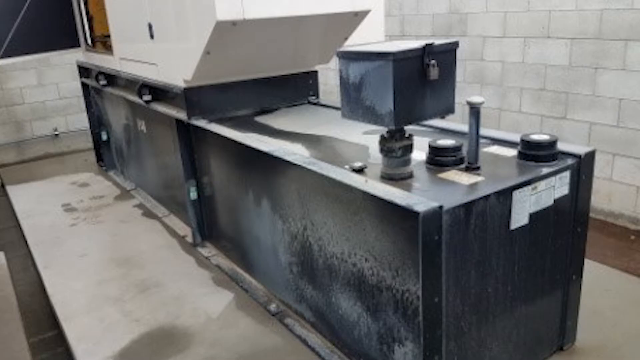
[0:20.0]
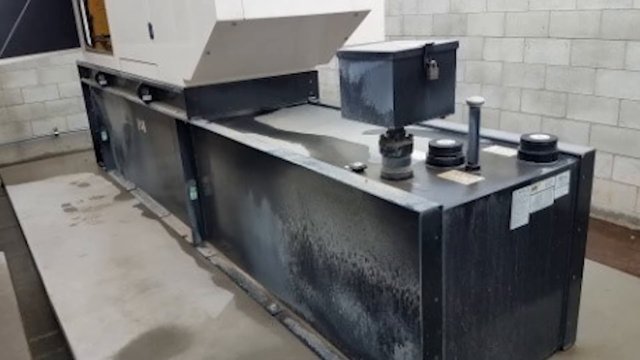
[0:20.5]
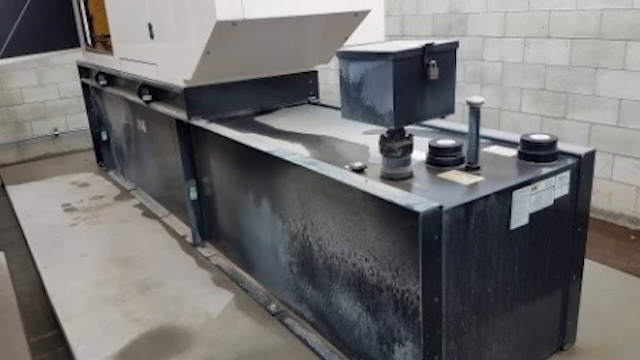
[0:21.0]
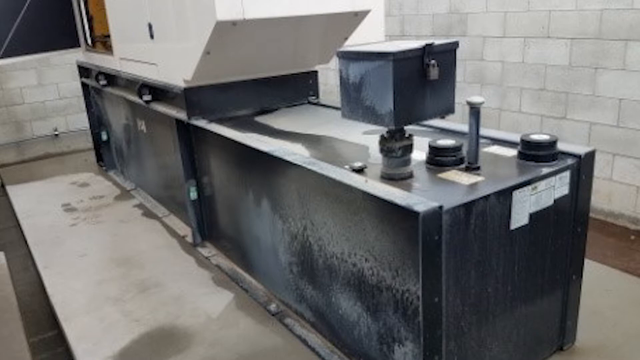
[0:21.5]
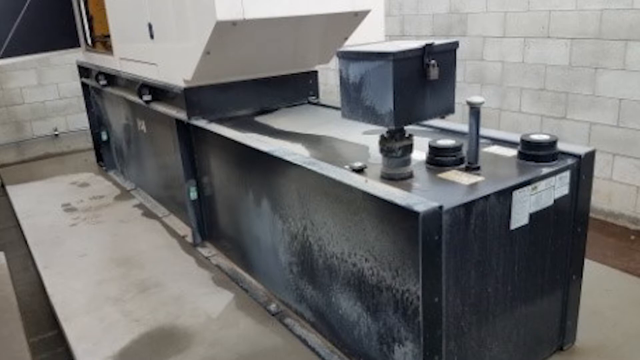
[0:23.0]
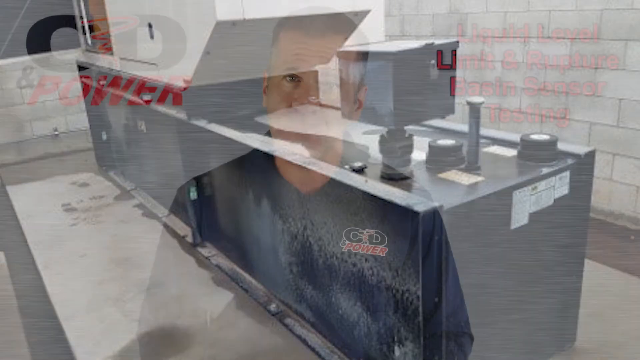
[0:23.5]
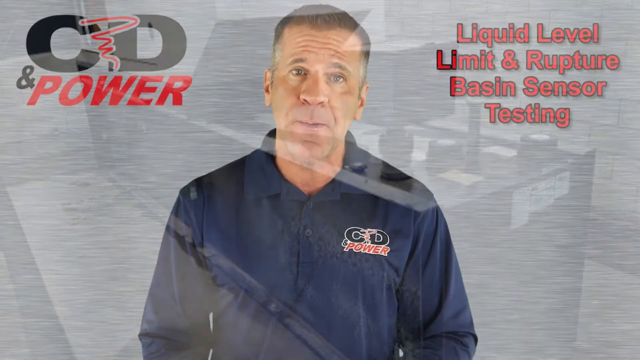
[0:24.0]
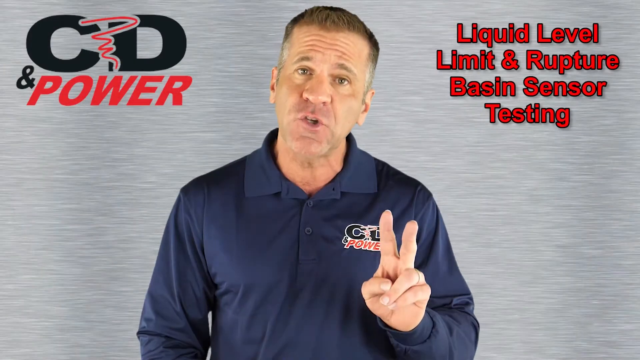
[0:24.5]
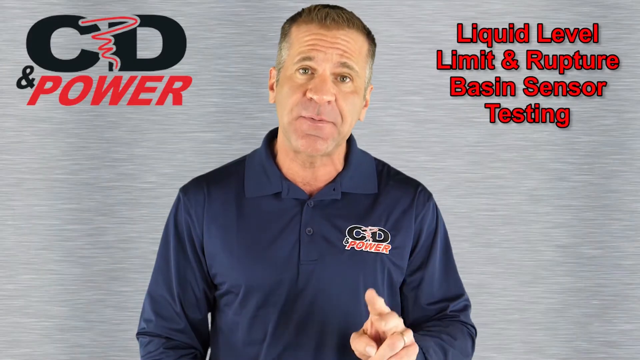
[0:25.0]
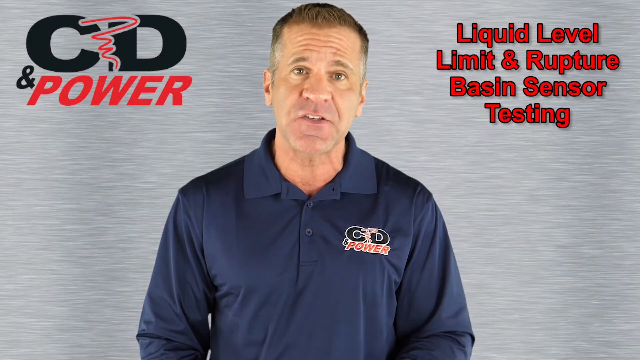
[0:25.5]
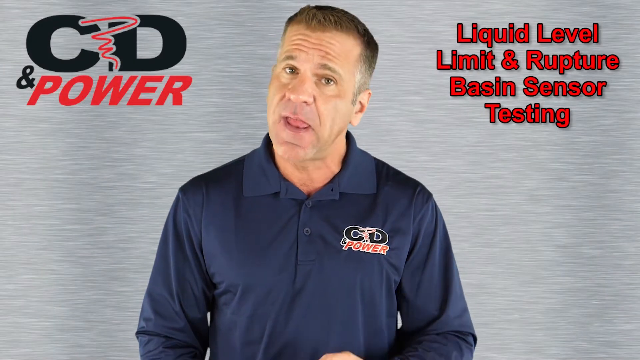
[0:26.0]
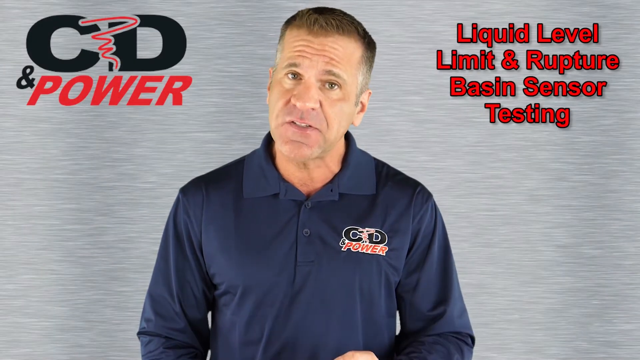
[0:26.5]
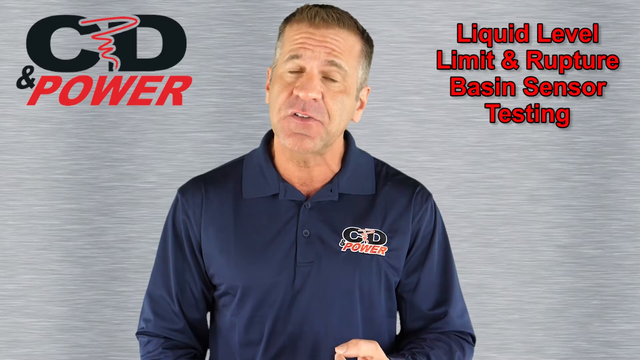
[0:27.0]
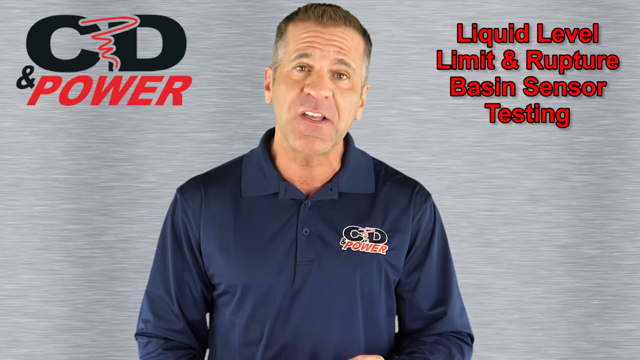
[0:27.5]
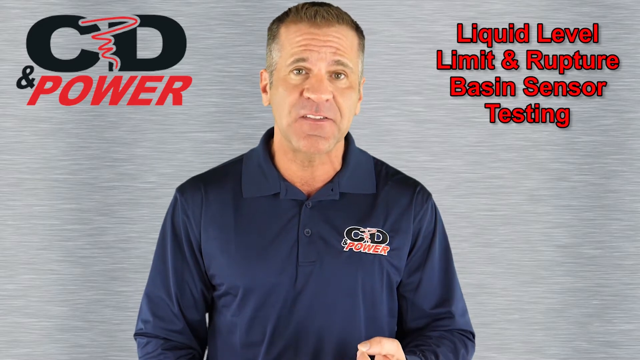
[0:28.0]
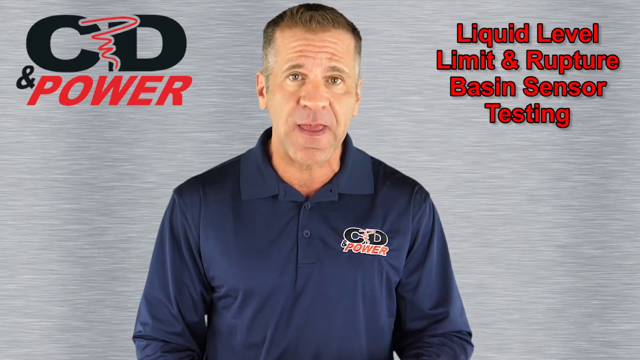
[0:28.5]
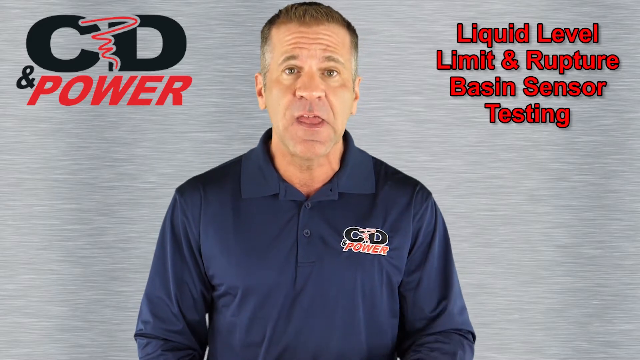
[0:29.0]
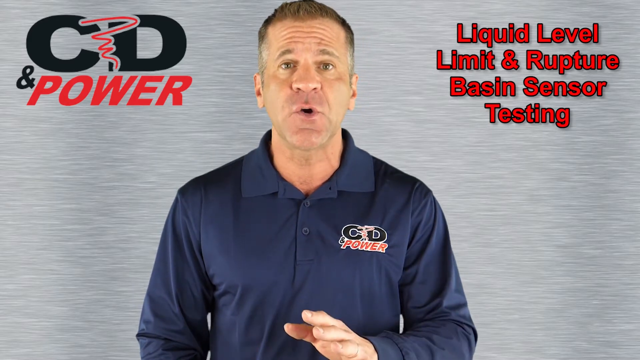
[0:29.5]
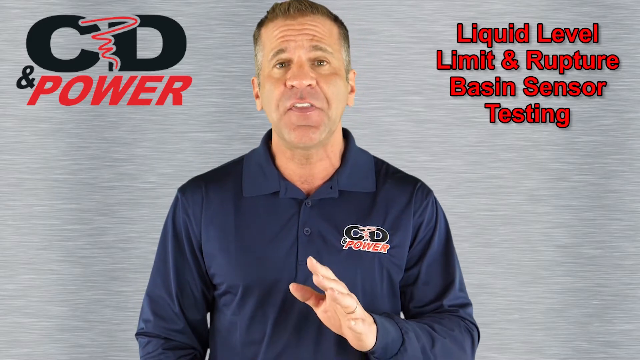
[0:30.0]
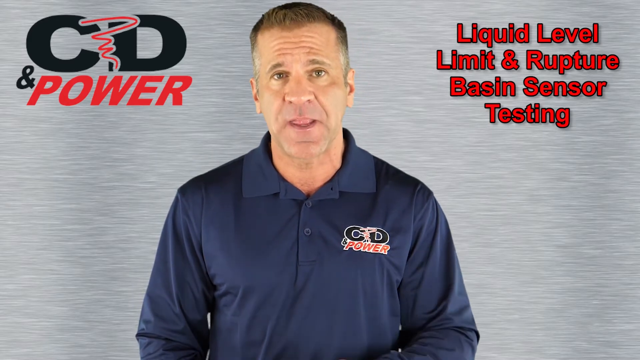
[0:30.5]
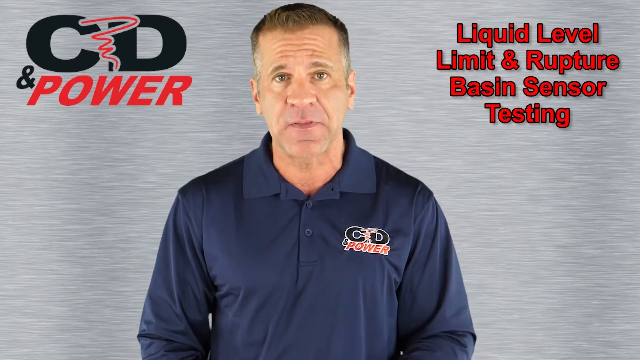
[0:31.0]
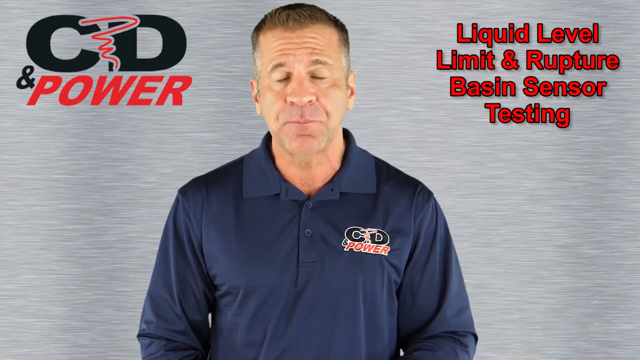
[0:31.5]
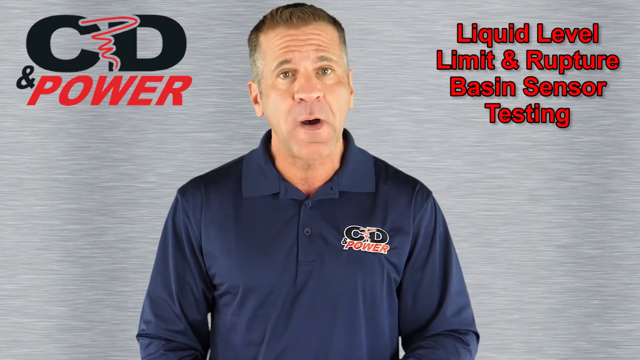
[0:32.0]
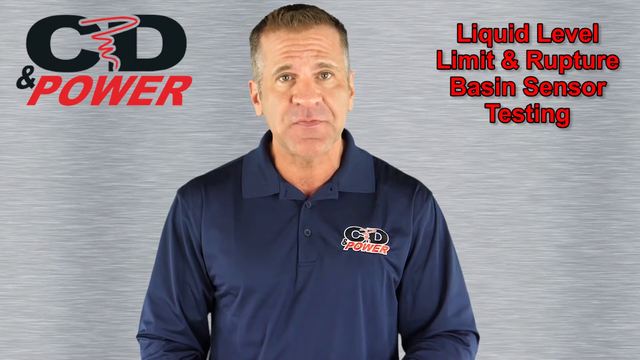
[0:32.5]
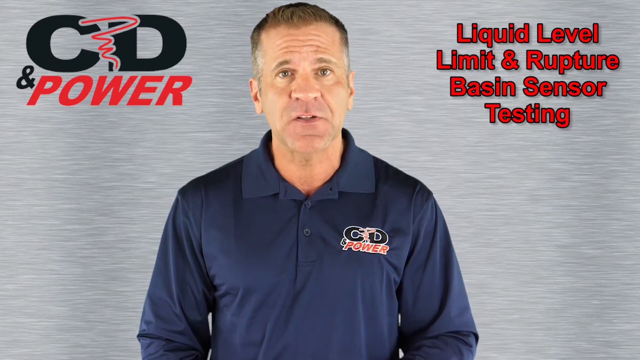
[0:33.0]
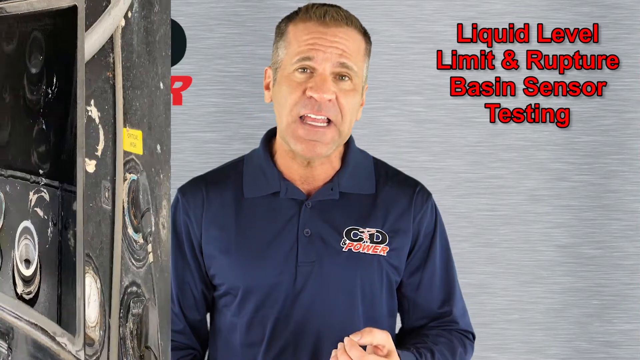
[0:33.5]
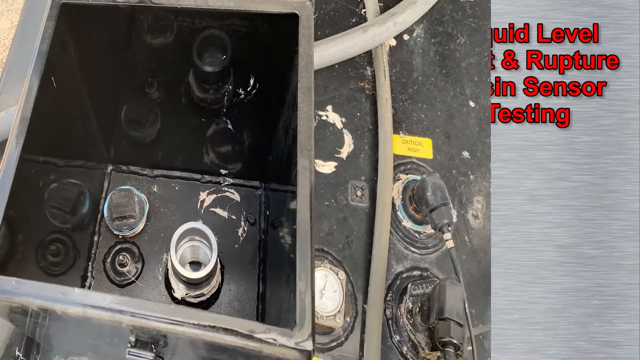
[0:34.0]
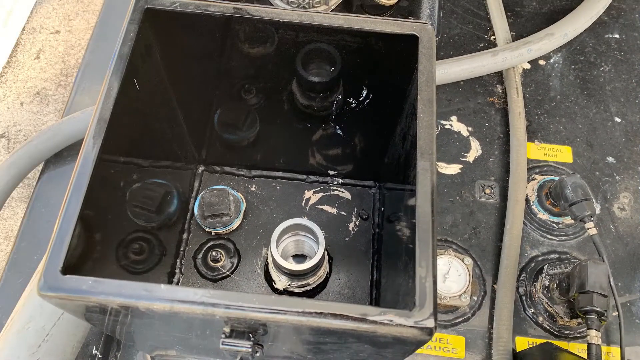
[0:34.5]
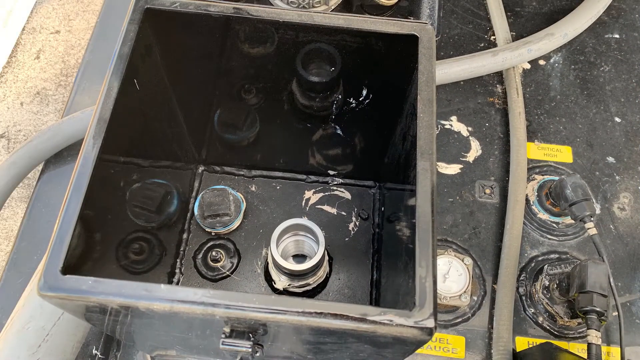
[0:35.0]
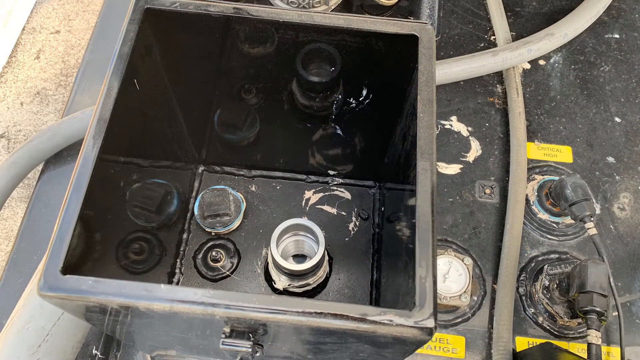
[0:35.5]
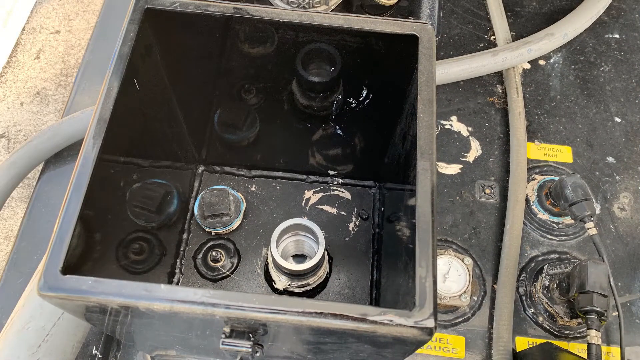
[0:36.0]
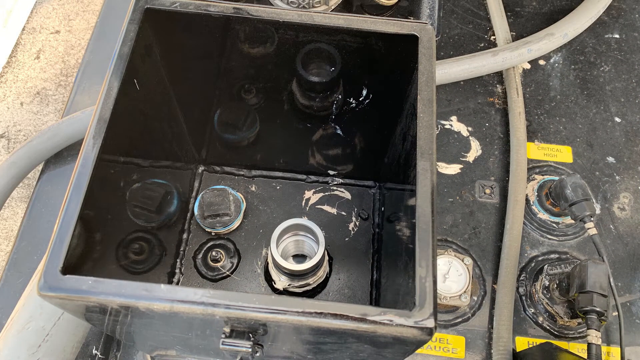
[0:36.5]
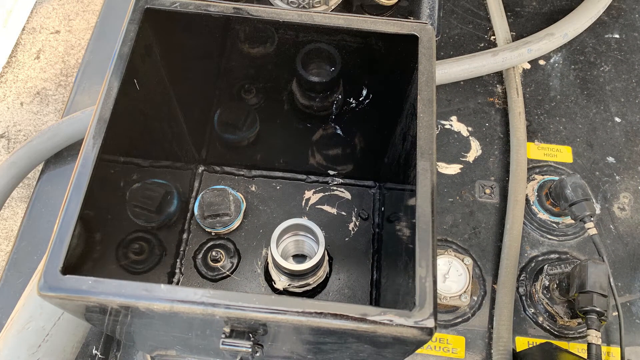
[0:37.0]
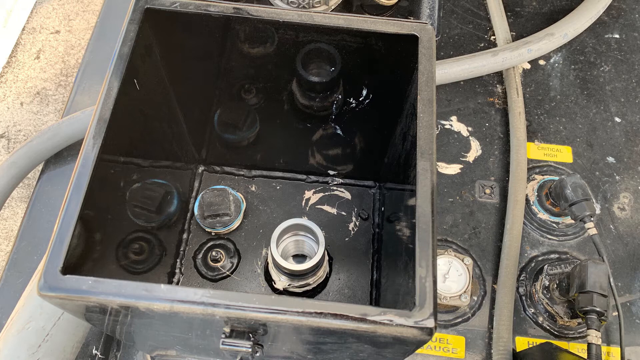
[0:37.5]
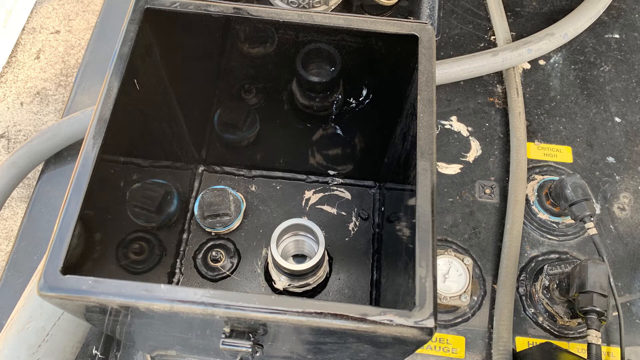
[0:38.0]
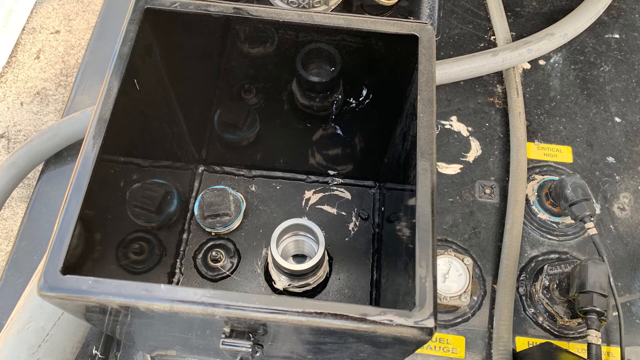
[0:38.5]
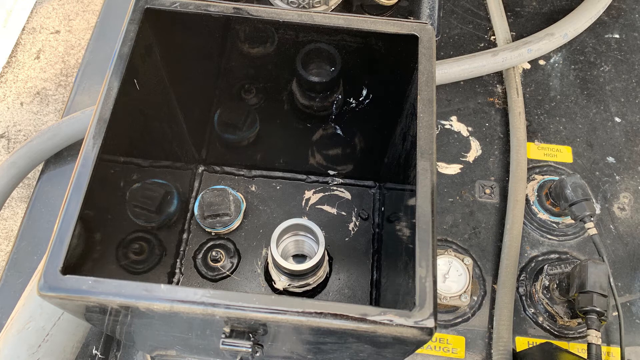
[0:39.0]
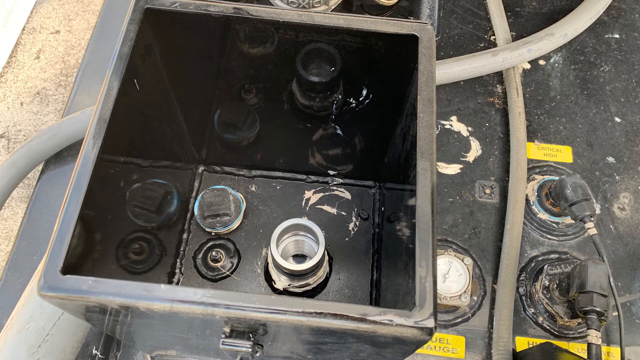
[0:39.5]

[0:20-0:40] The video transitions to another picture showing what looks like another machine, a very long one. Its right side is all black and looks like more machinery, apparently where most of its parts are. Toward the left side there appears to be a part at the top where things go in and out, almost like a conveyor. Only the side is visible, not the front, and a sharp edge kind of peeks out, with some sort of box that looks like an opening. The man appears again, talking, and then the video transitions to a picture of bolts inside a black box.